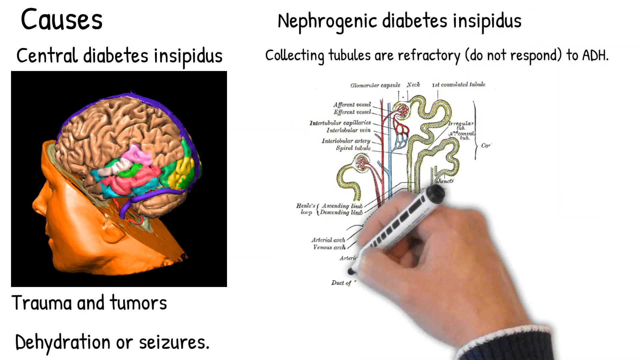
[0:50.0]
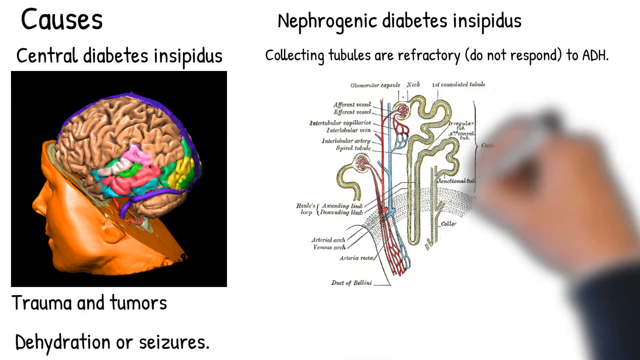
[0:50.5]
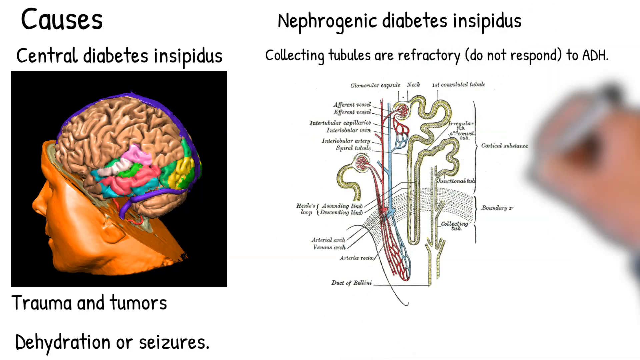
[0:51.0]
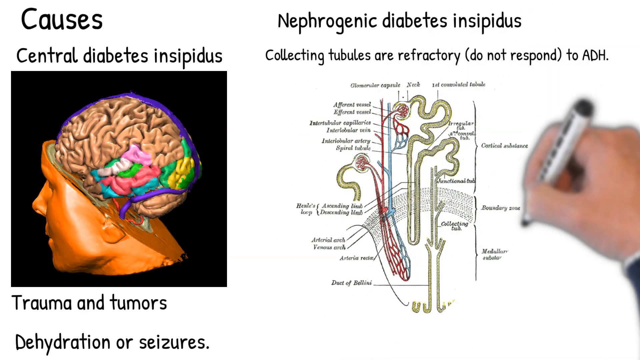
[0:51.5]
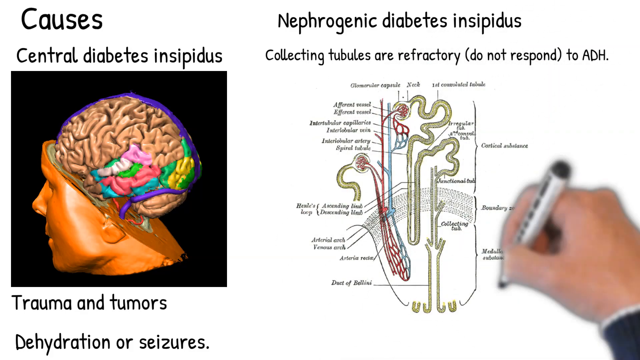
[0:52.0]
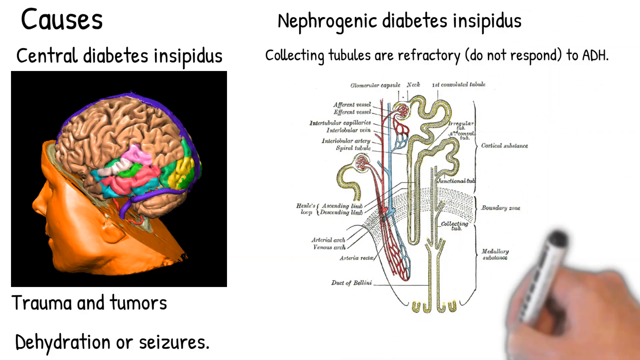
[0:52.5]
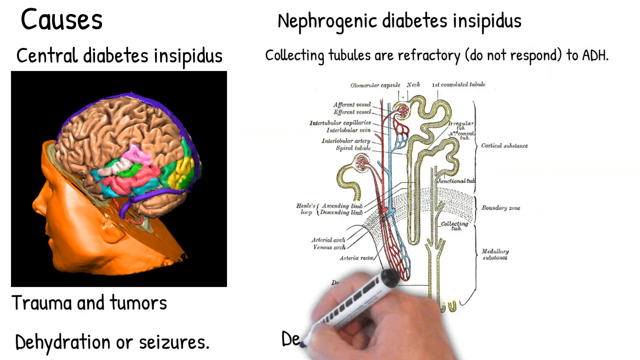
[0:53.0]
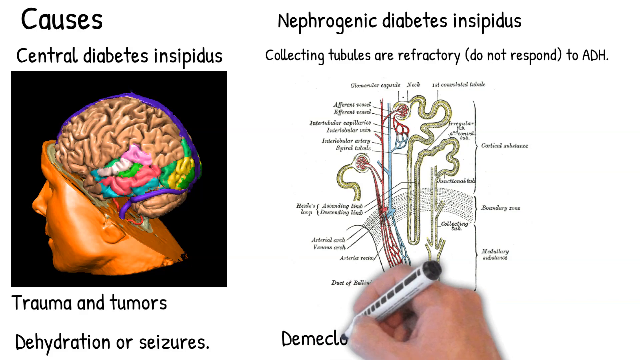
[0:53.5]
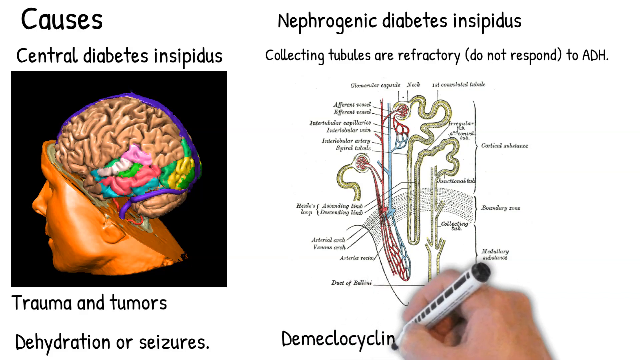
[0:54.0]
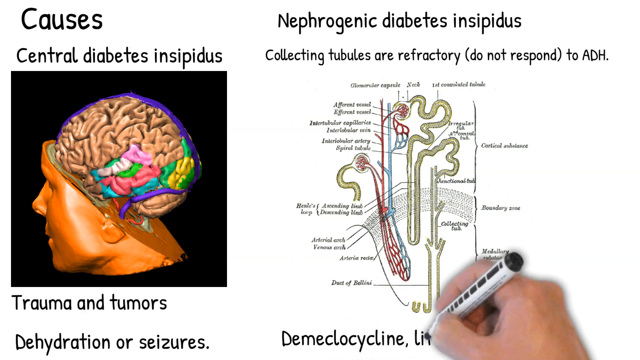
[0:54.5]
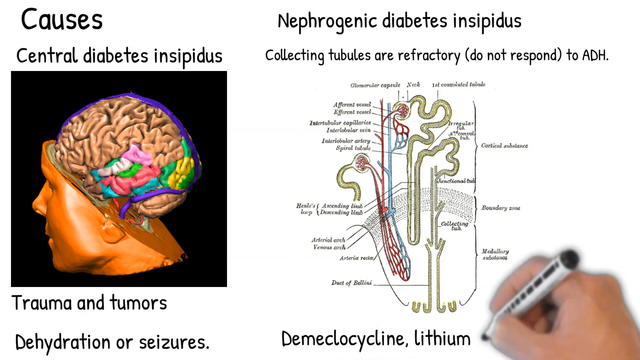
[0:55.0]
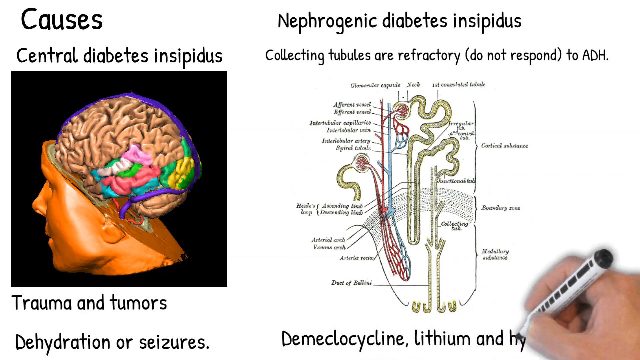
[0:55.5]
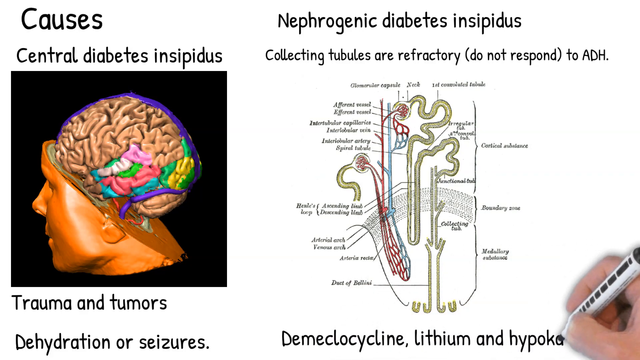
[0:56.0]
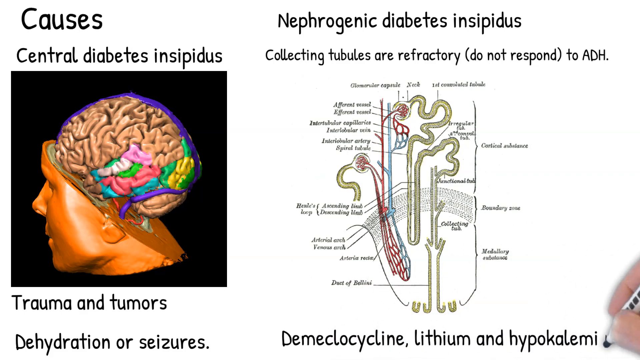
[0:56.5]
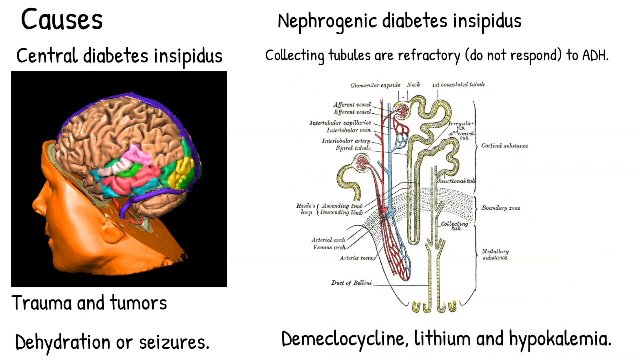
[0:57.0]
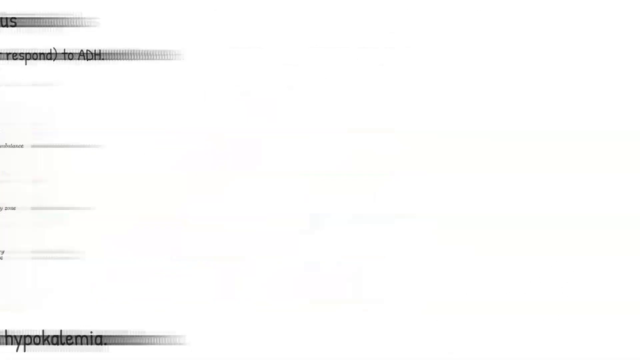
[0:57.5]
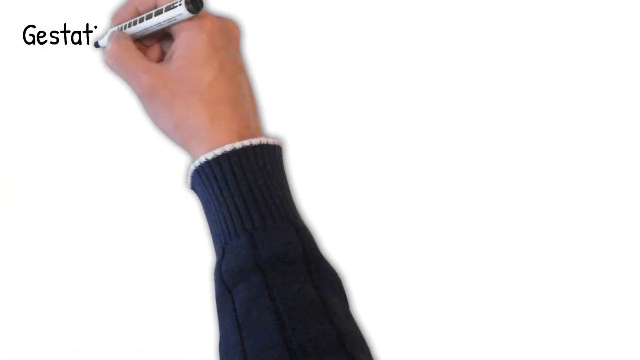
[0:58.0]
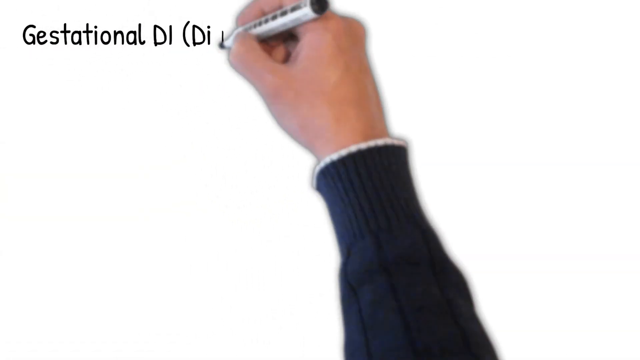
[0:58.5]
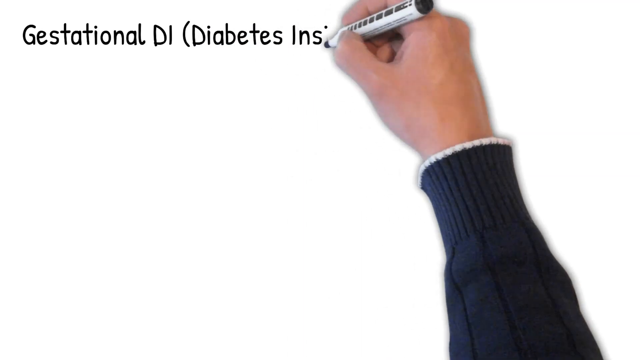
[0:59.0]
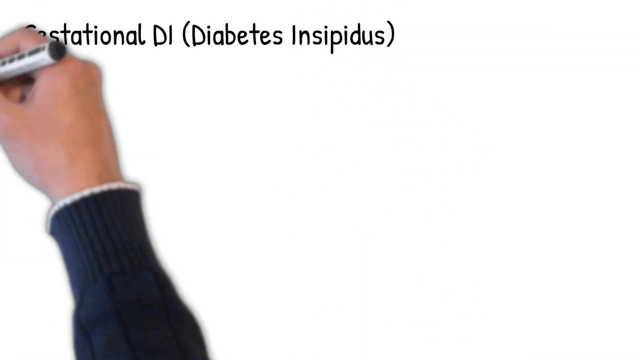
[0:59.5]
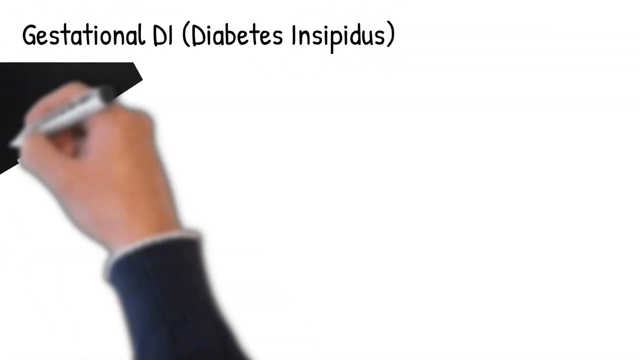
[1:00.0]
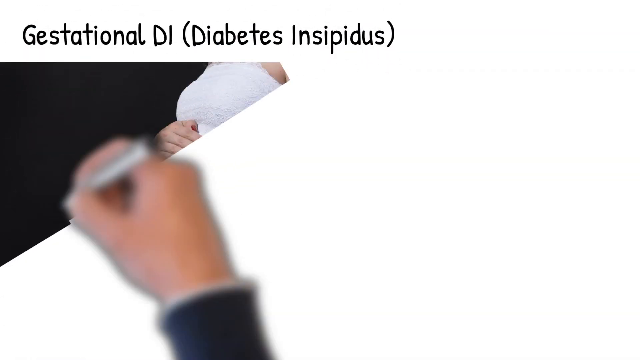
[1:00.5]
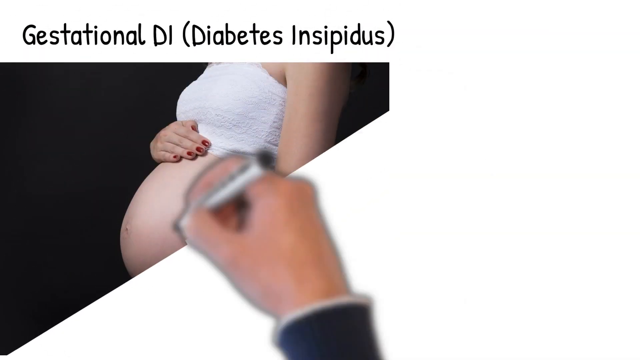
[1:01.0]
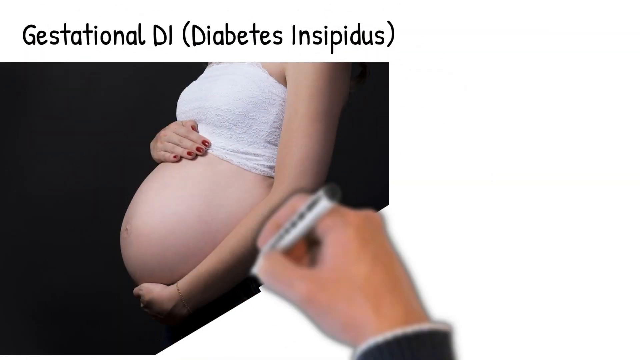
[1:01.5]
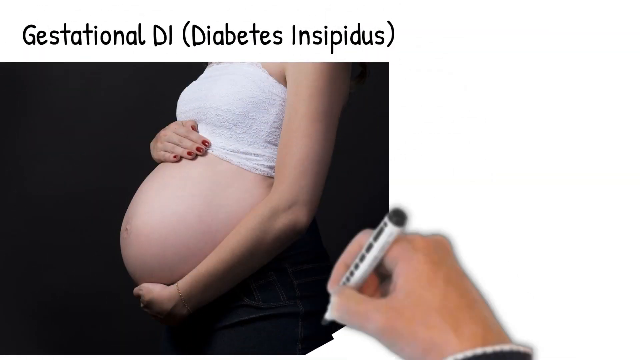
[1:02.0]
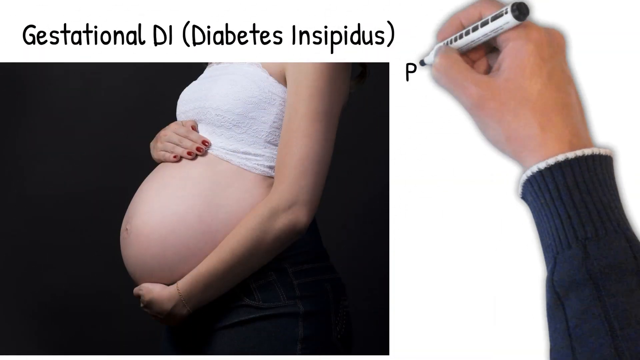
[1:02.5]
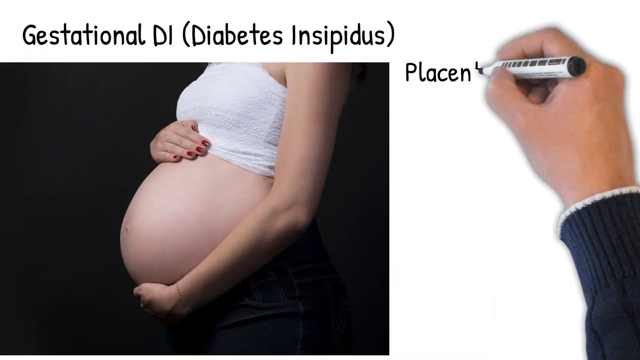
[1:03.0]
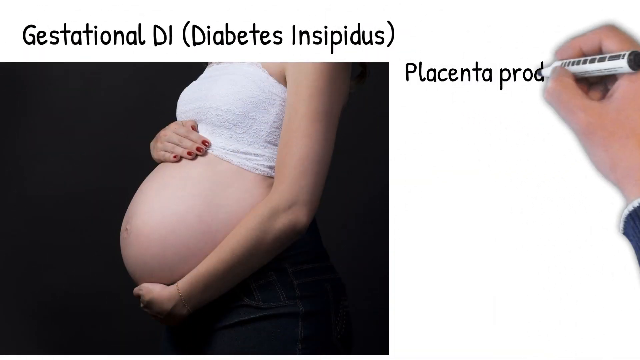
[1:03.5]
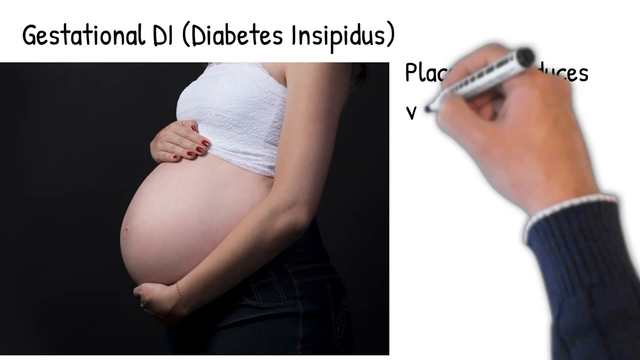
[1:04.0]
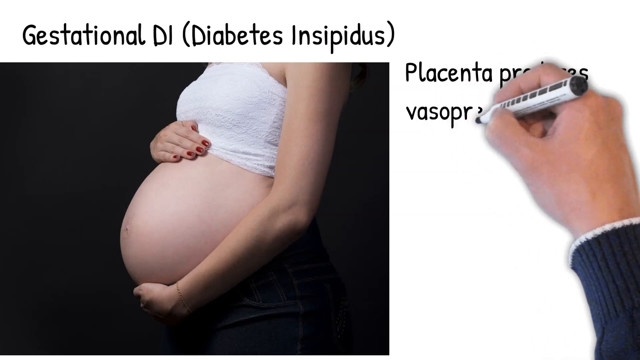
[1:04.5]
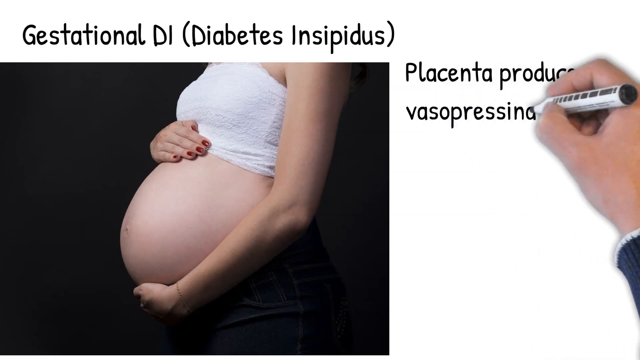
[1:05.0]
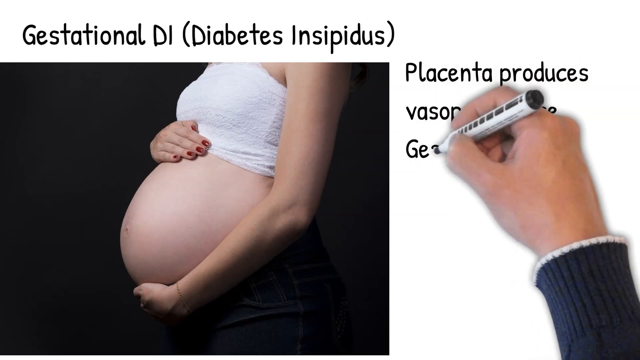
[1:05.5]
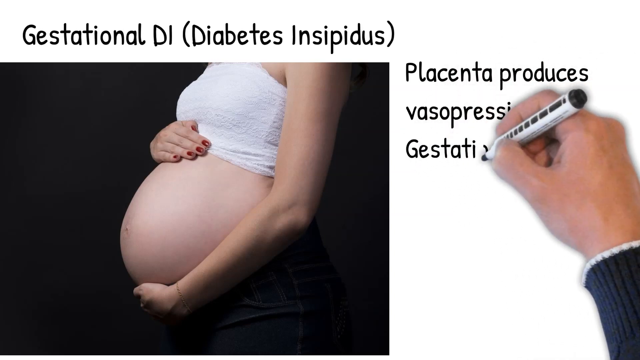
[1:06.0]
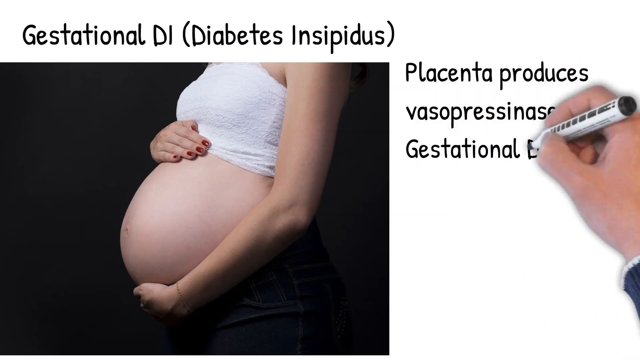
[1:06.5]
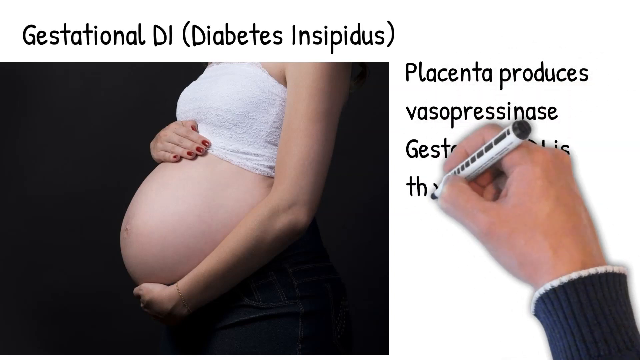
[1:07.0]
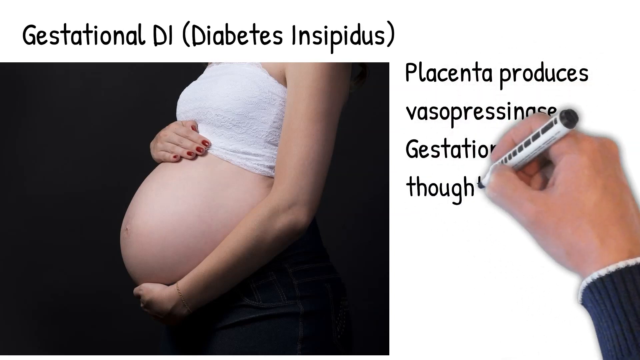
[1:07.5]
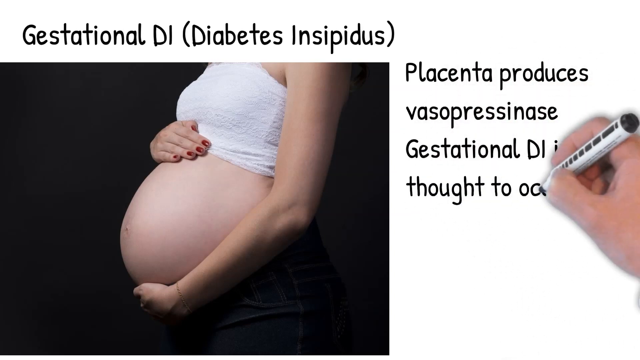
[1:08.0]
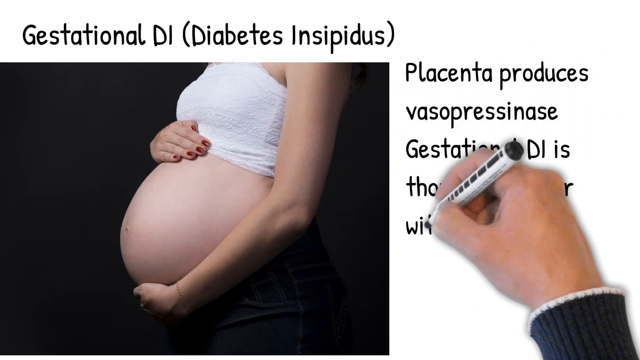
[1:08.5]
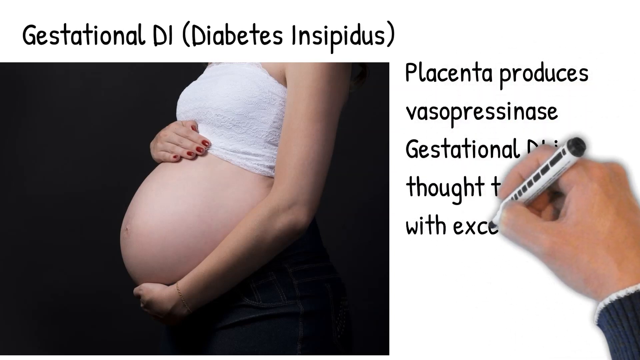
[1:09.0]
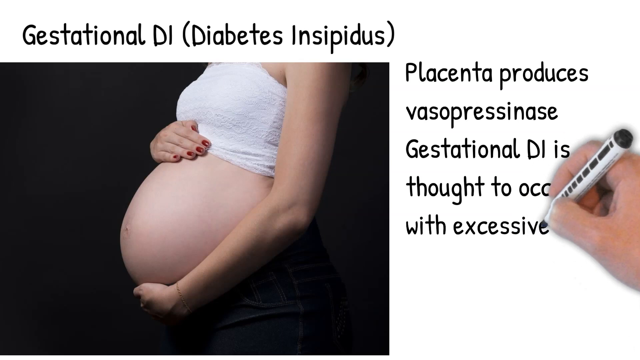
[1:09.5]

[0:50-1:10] He finishes the drawing on the right-hand side for nephrogenic diabetes insipidus, a very detailed, close-up drawing of what looks like the inside of the human body, though it is hard to tell what it is. At the bottom he writes a list including "lithium" and "hypokalemia." The video then moves to a new shot on gestational DI. The drawing becomes a profile view of a pregnant woman from the shoulders down. She wears a white top pulled up over her belly, her right hand rests on top of her baby bump, her left hand holds her belly underneath the bump, and she wears red nail polish. On the right-hand side he writes "placenta produces vasopressinase. Gestational DI is thought to occur."